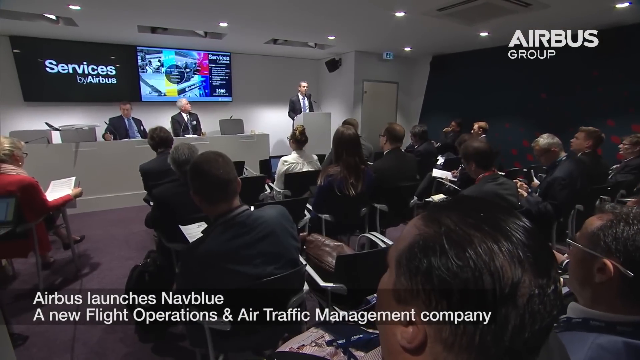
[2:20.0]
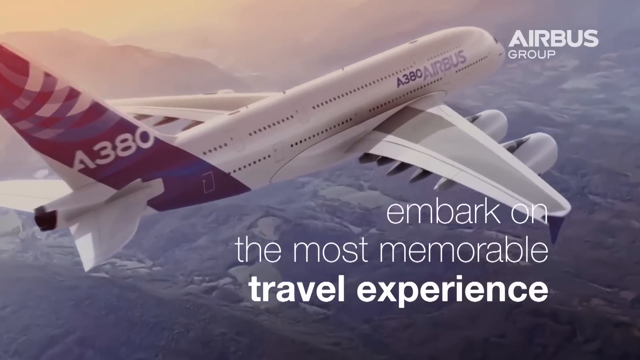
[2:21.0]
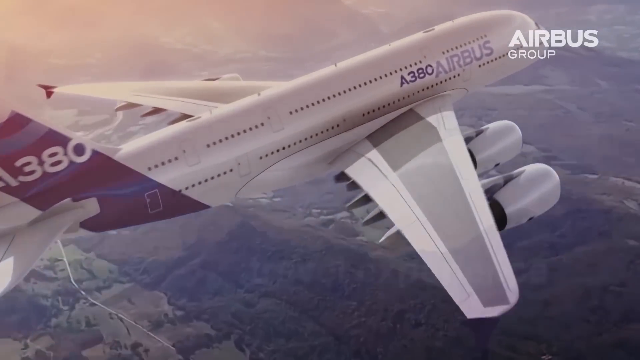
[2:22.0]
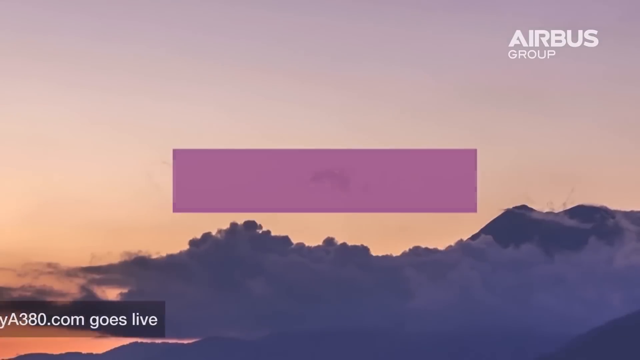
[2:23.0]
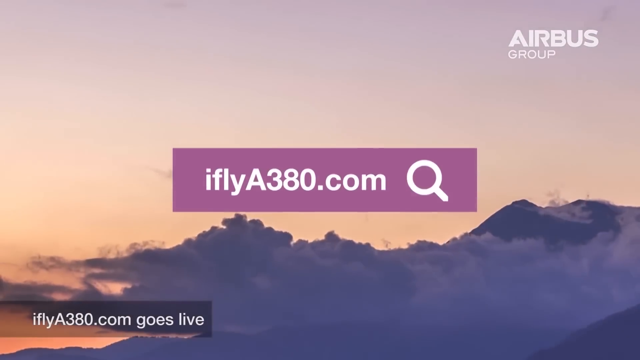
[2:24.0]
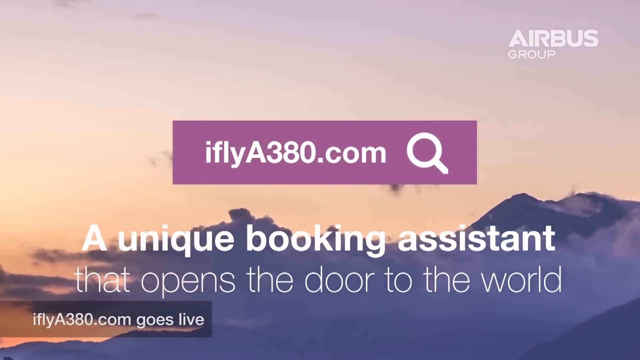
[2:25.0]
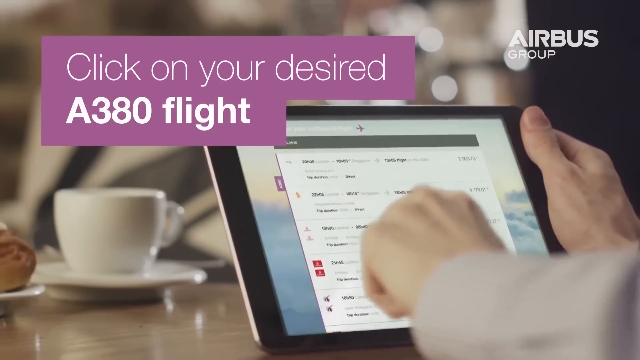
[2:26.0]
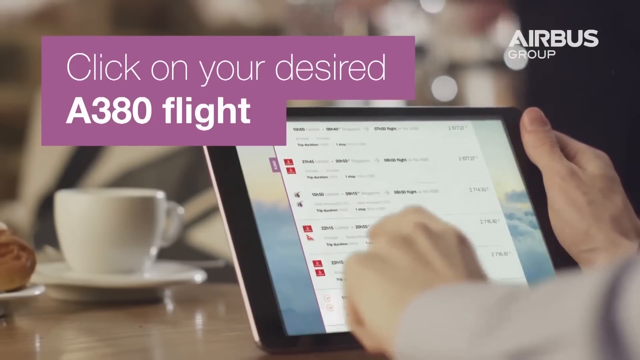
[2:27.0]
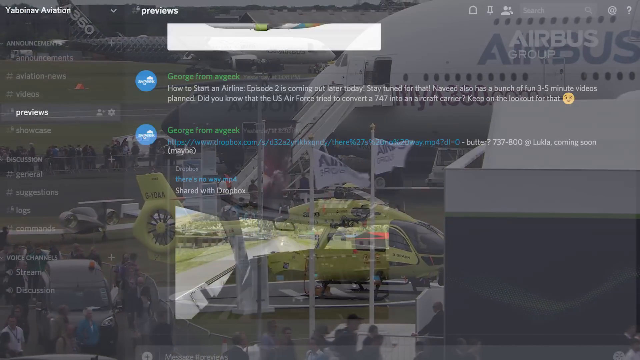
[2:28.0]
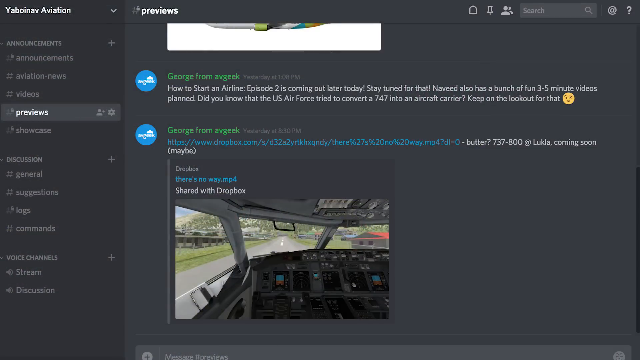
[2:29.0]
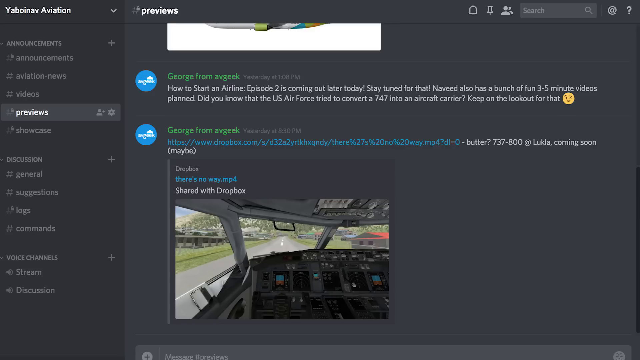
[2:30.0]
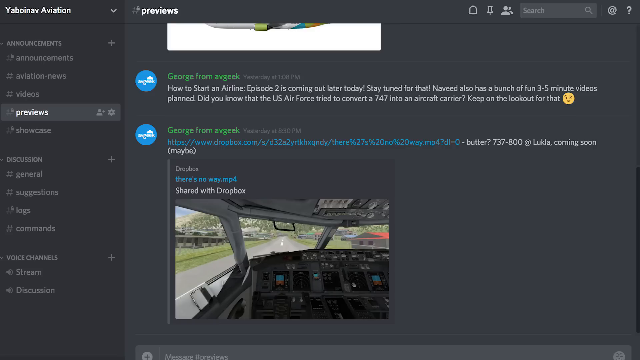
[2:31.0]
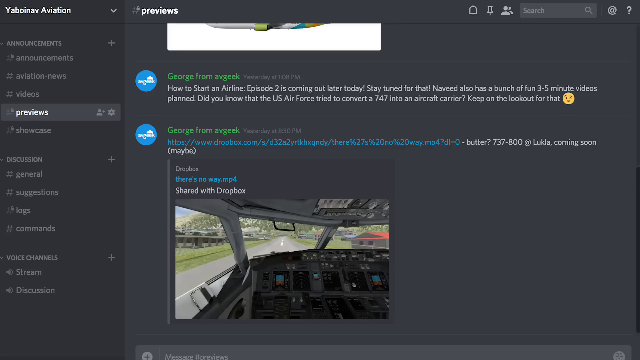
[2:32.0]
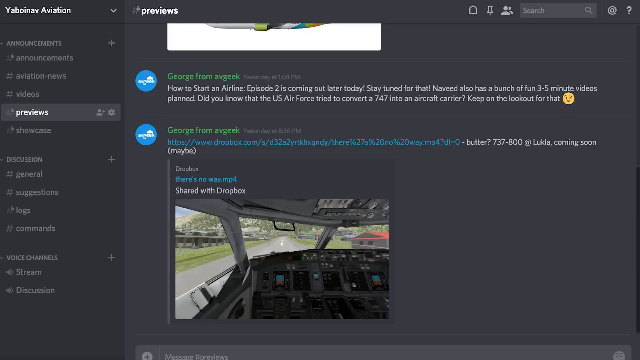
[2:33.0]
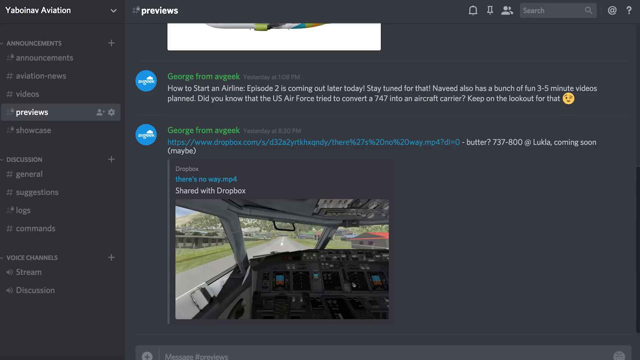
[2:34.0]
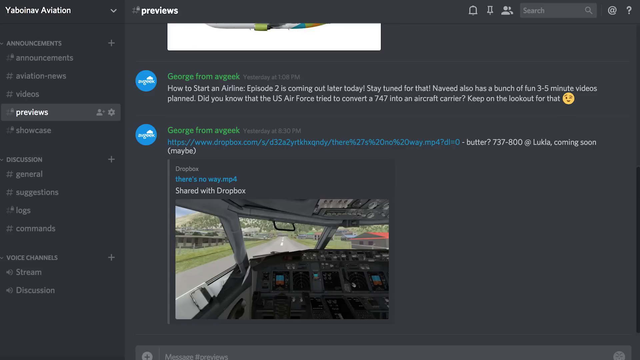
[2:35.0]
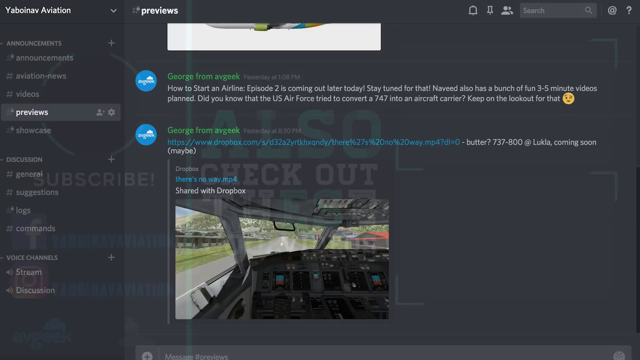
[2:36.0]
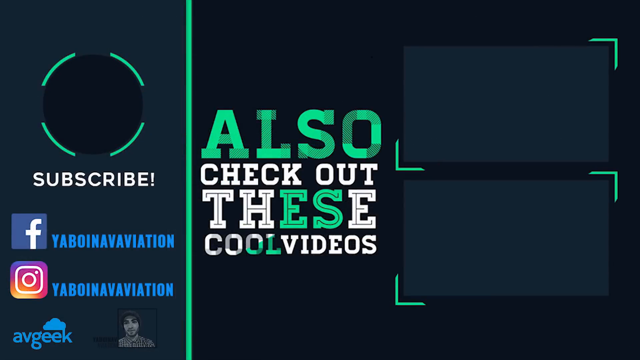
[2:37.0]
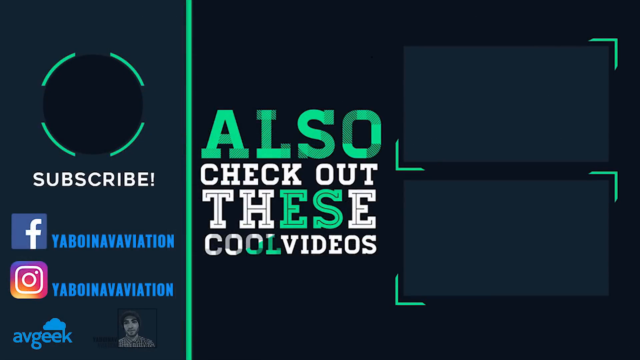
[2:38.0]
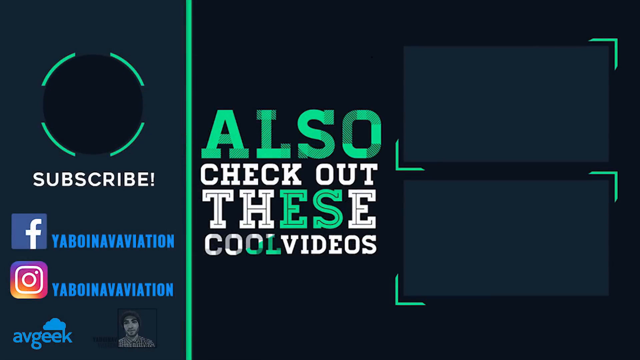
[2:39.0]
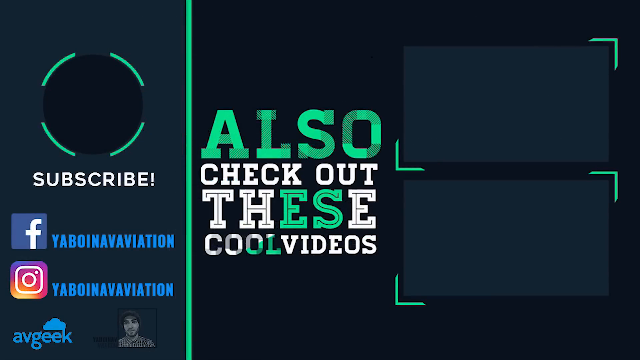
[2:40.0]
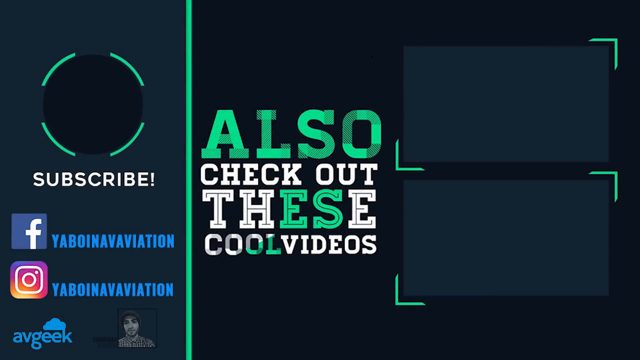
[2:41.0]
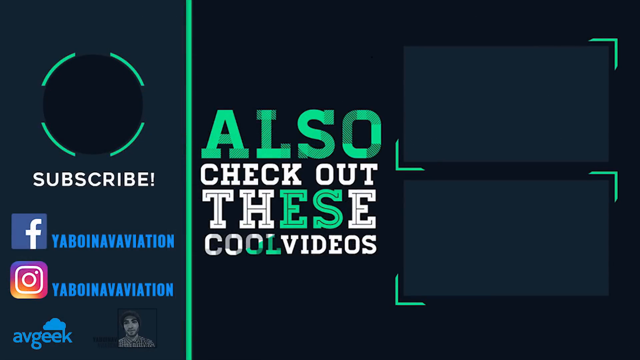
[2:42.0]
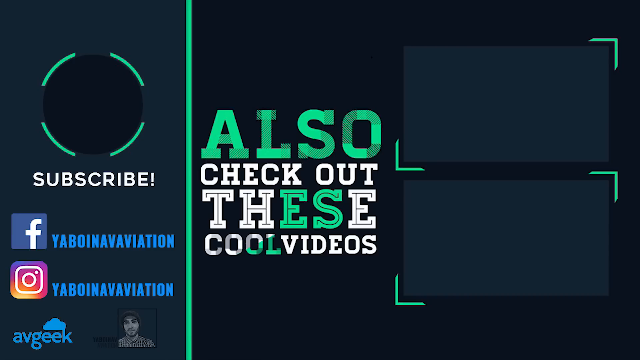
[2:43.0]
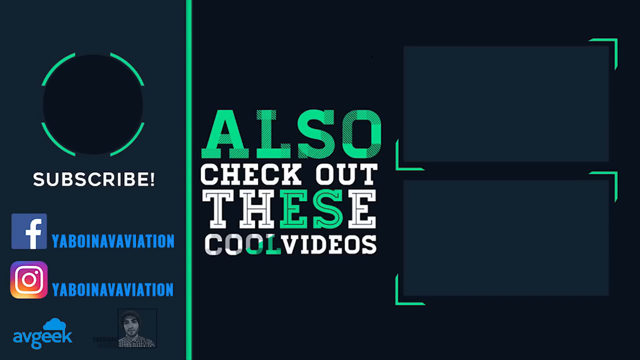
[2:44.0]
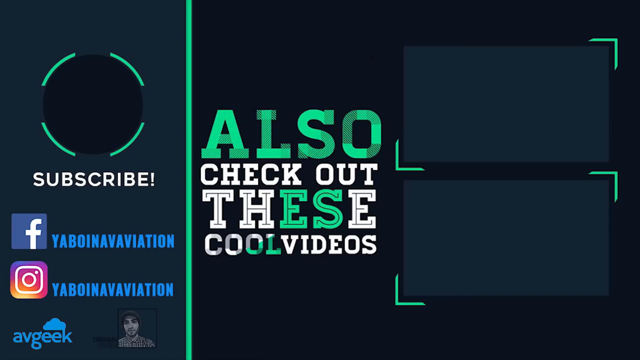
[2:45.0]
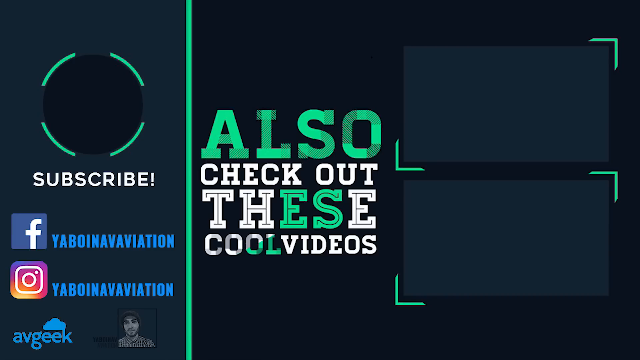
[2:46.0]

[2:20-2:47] A speaker talks inside a room. Next, an A380 Airbus plane flies in the sky with the text "Embark on the most memorable experience". The video cuts to the words "IflyA380.com" with a search icon, and then the text "a unique booking assistant that opens the door to the world". Somebody swipes a screen, apparently booking a flight, as the screen says "click on your desired A380 flight". The video cuts to a picture of an Airbus A380 on the tarmac with a yellow-green helicopter, and many people looking at it. Articles or comments about how to start an airline are shown with a picture of a cockpit. Finally, the words "Also check out these cool videos" appear in the middle of the screen, with "subscribe to Yaboinav Aviation" on the left.